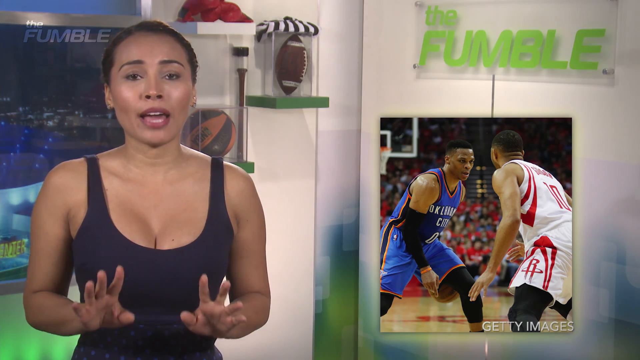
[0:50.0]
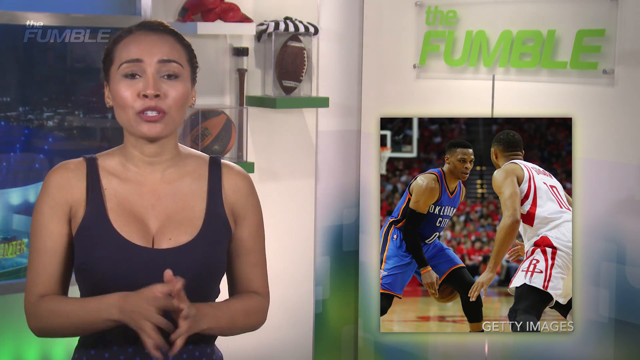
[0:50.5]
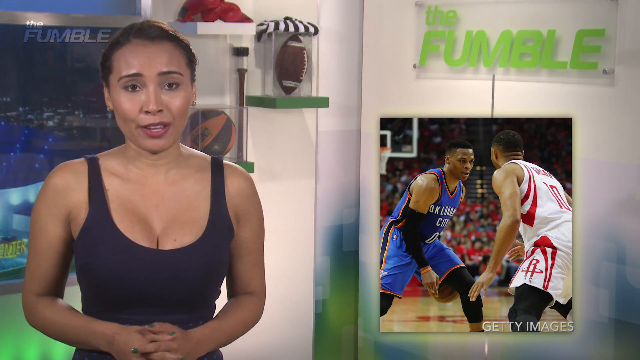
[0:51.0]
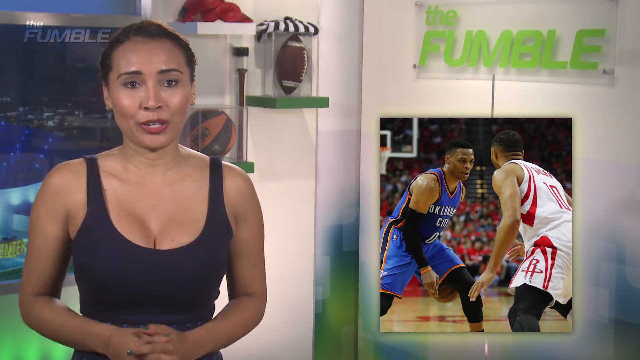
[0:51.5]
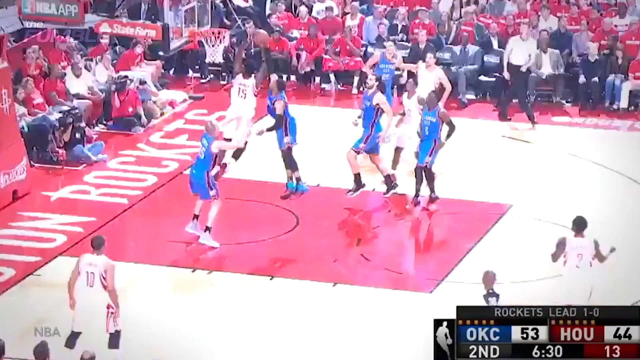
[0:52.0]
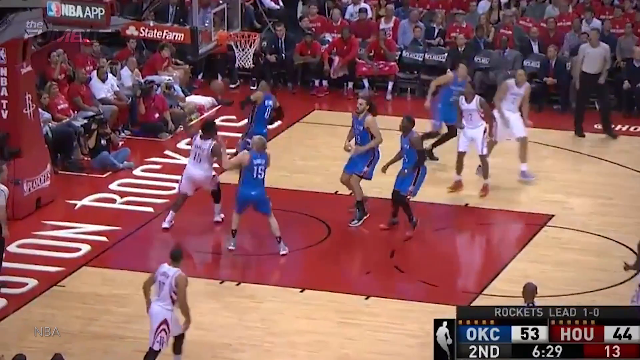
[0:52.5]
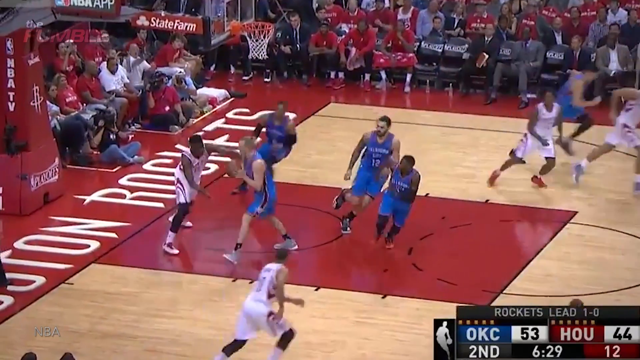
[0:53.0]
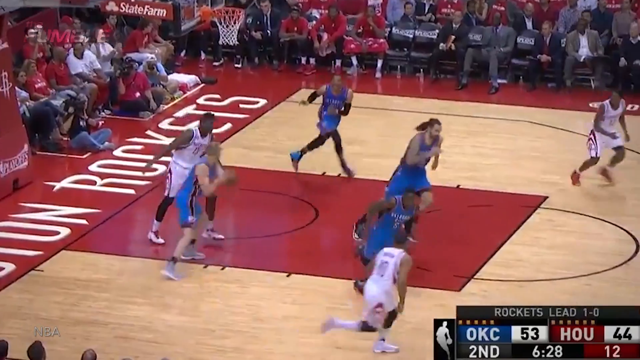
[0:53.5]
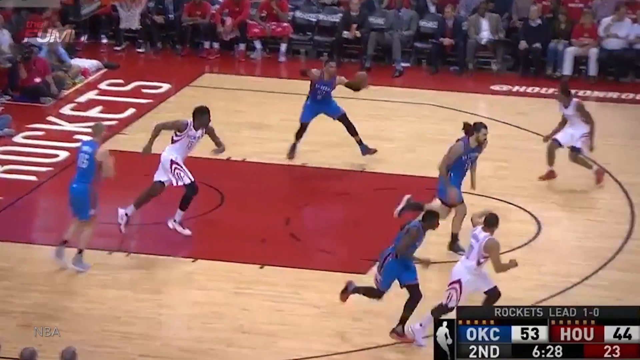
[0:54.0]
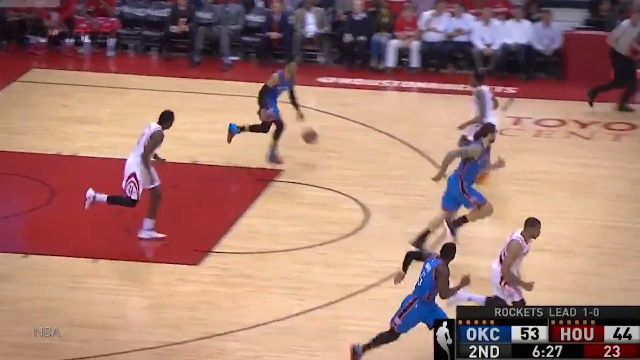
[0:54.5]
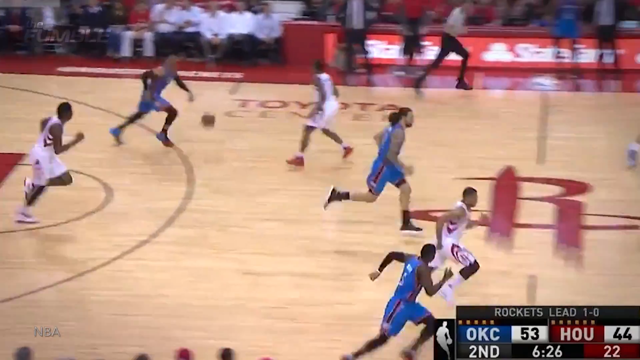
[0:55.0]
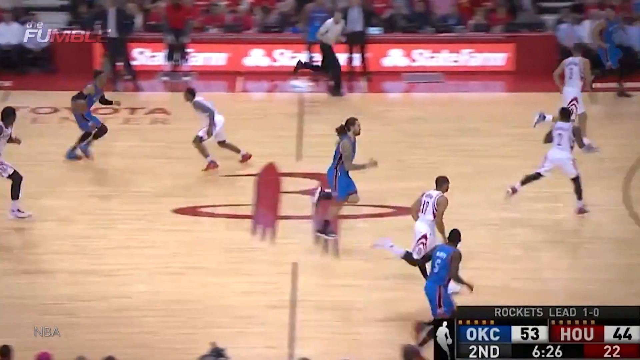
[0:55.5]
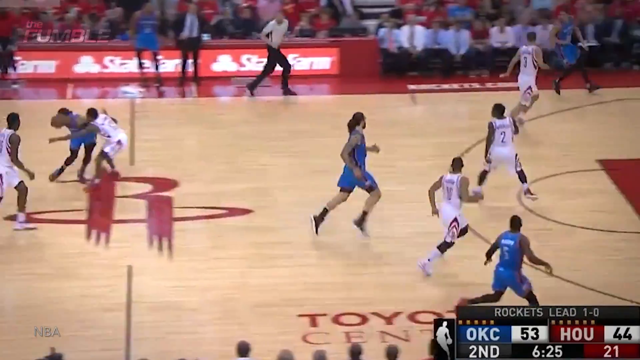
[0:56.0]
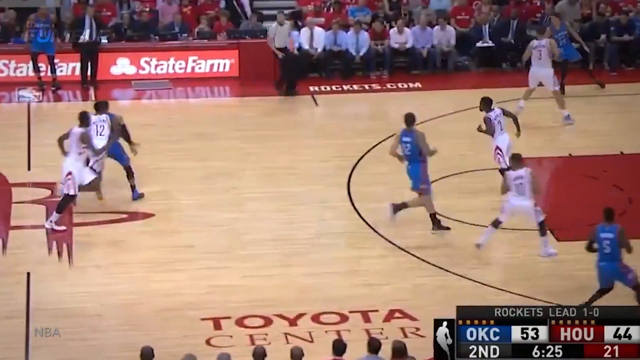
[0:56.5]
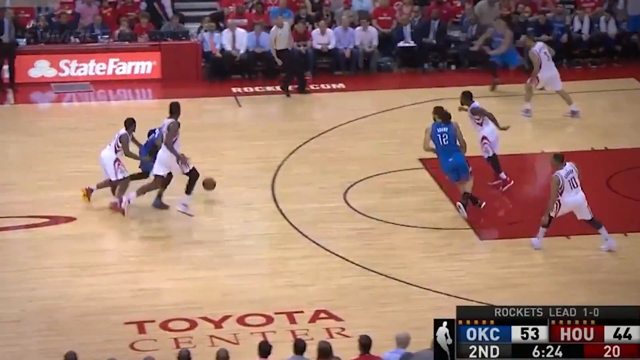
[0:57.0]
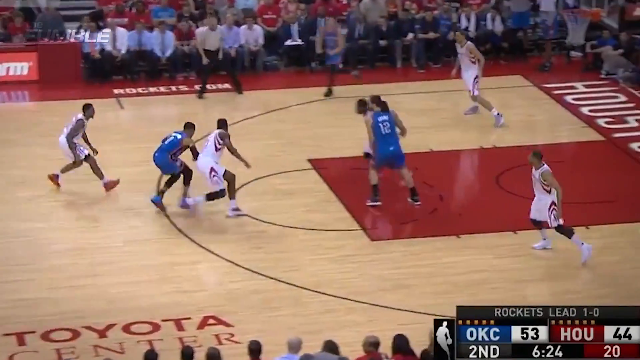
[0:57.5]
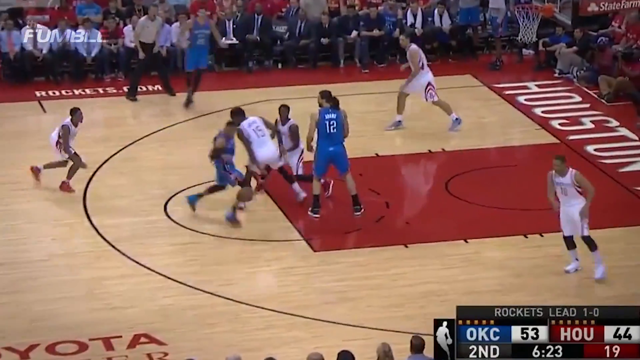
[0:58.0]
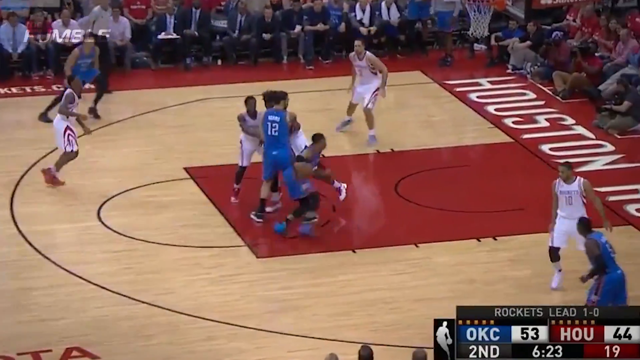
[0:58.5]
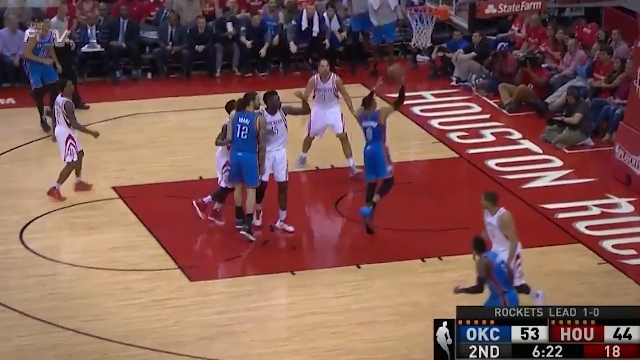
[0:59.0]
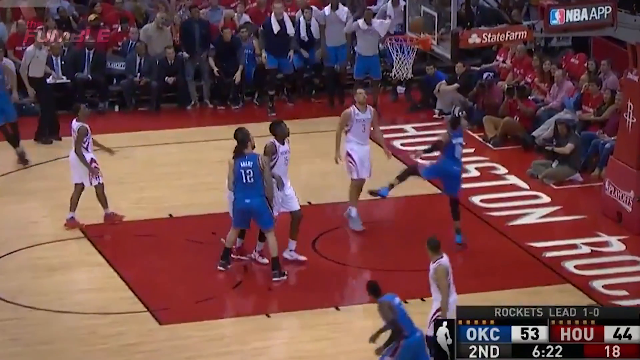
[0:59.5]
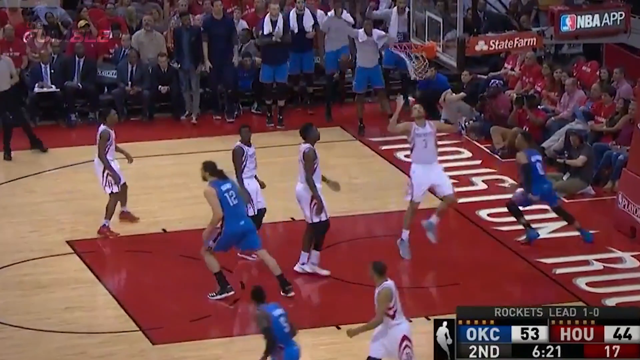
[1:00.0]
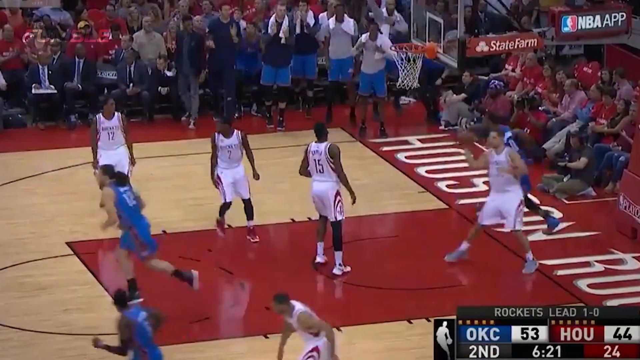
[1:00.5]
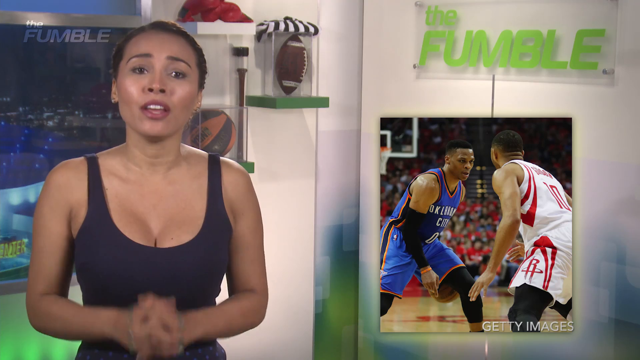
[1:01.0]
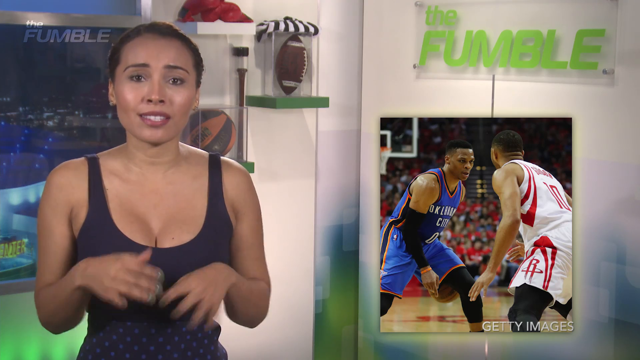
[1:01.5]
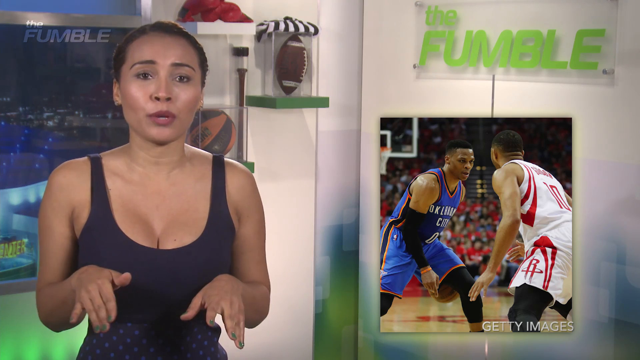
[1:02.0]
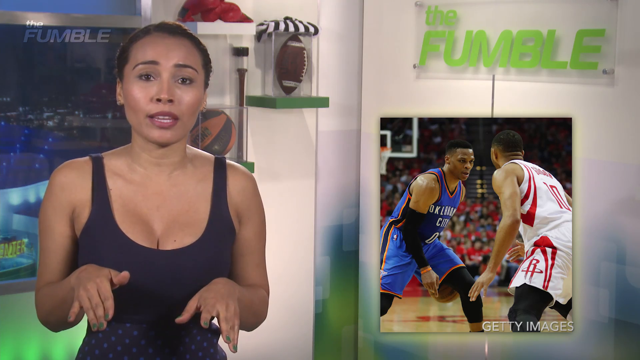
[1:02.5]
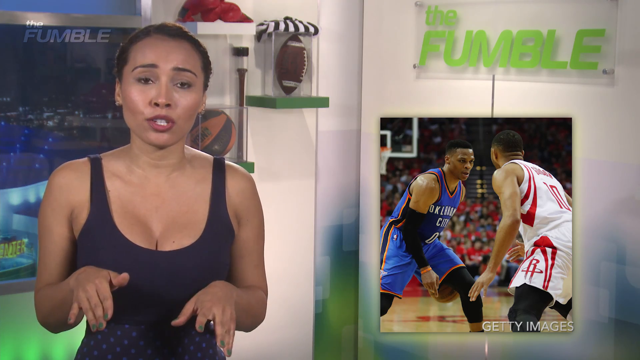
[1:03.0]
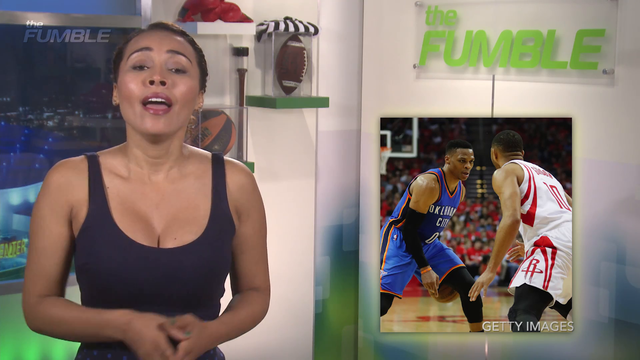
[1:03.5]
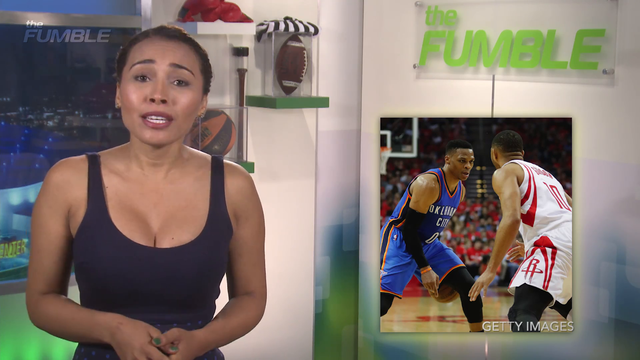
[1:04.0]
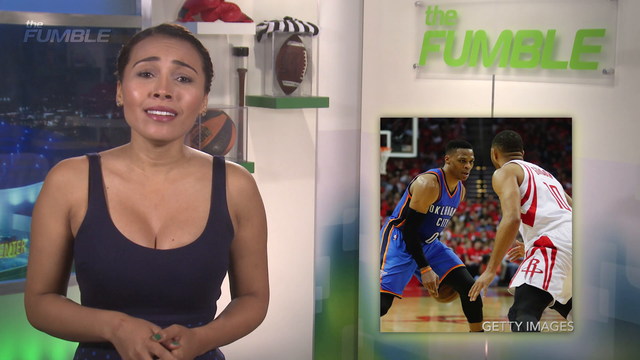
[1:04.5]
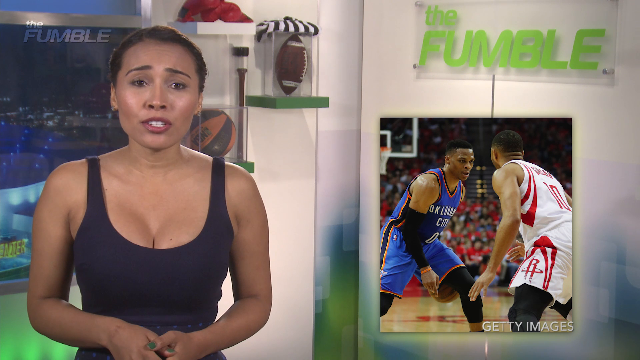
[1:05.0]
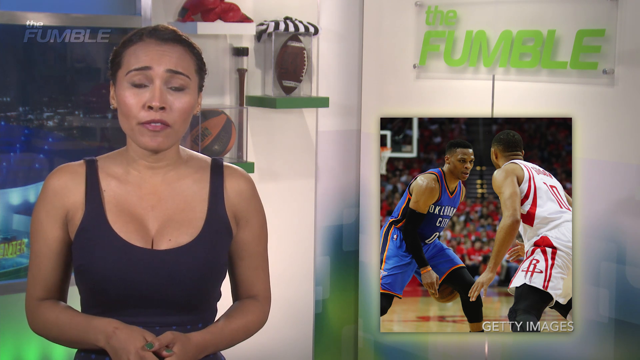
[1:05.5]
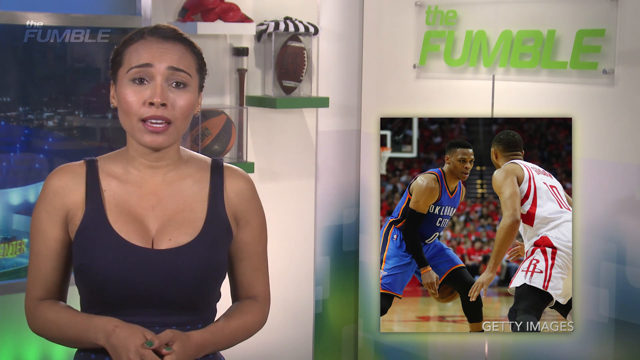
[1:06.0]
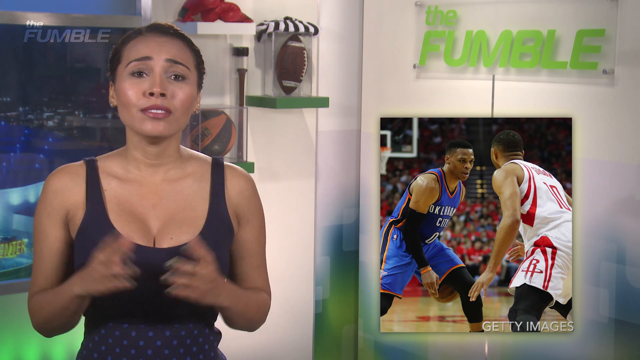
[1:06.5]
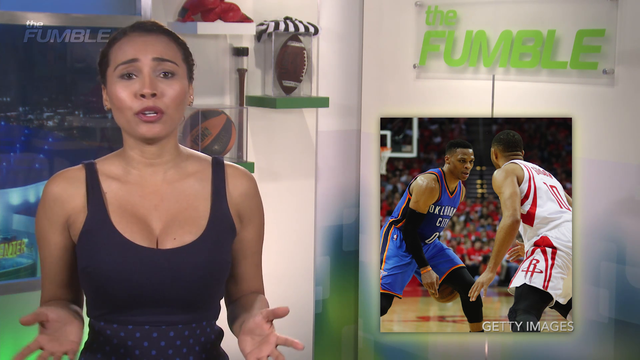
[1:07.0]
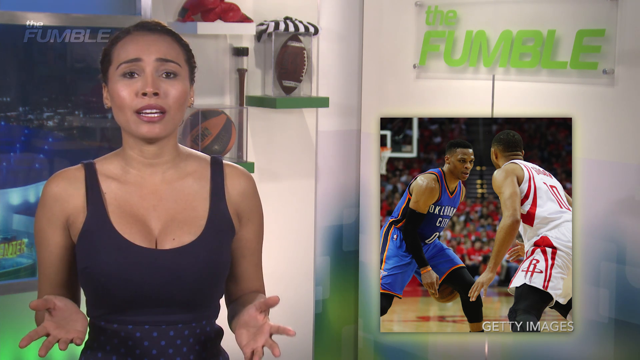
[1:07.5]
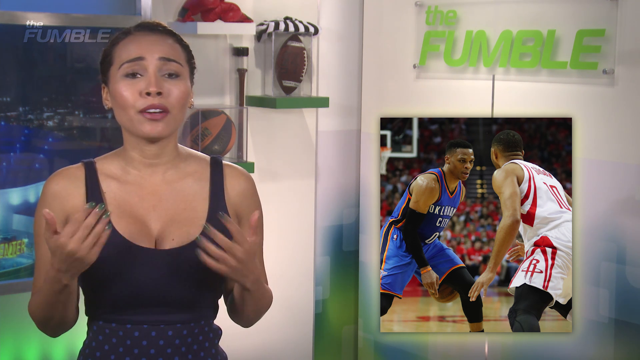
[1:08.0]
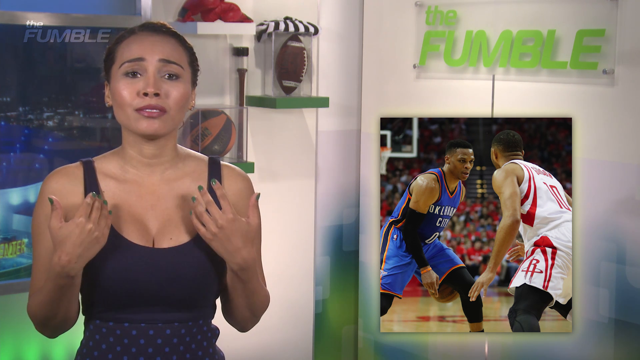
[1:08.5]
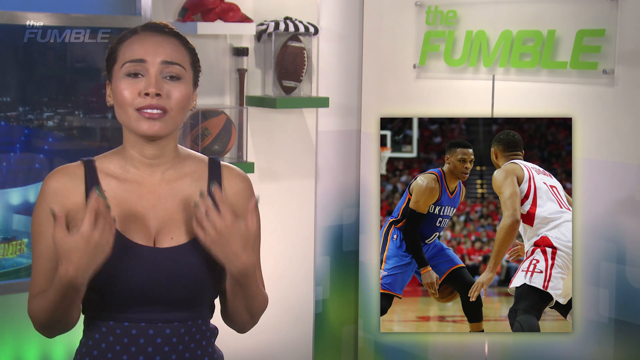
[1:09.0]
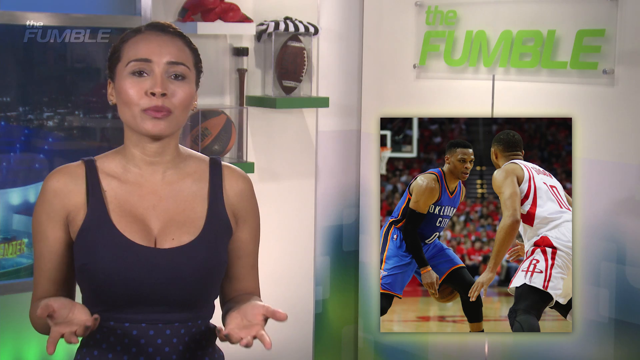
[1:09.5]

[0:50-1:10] A game clip between Oklahoma City and the Rockets plays. The Rockets try to score but fail, and an Oklahoma City player, a white man, passes the ball to Oklahoma City's number 0. He dribbles with both hands, gets past two Rockets players, and goes on to score a highly skilled basket.